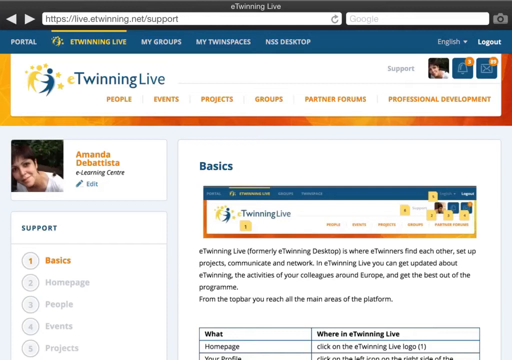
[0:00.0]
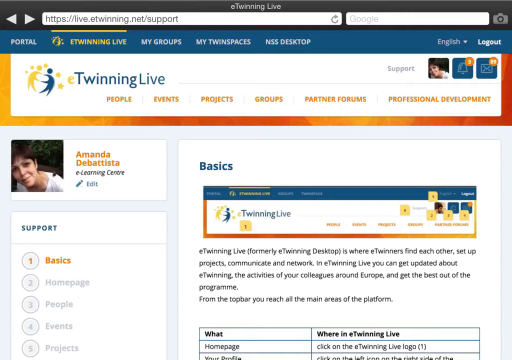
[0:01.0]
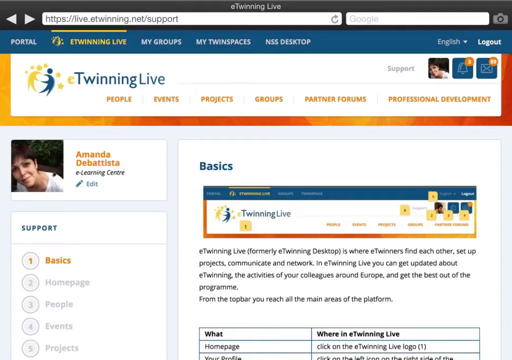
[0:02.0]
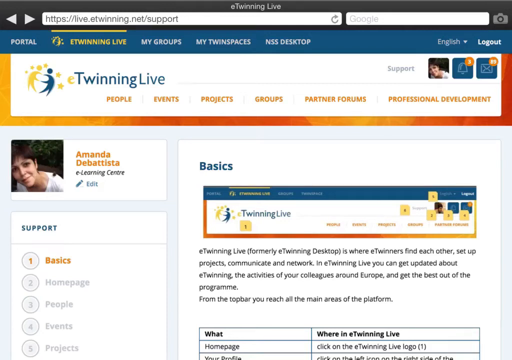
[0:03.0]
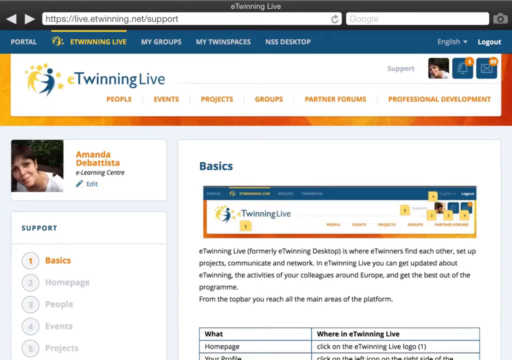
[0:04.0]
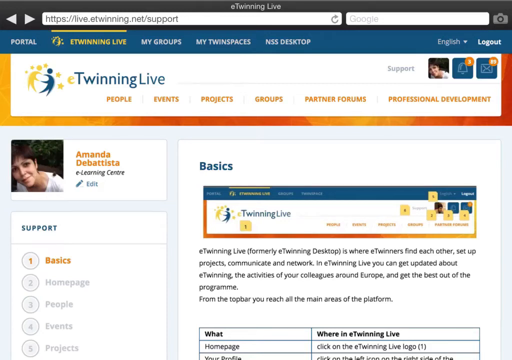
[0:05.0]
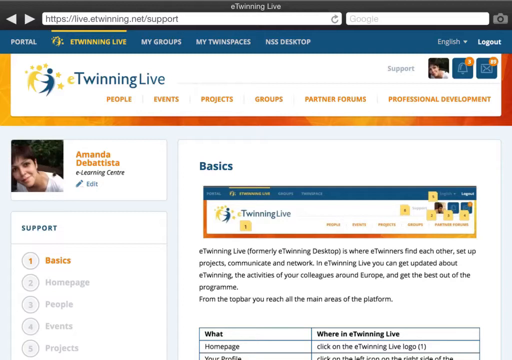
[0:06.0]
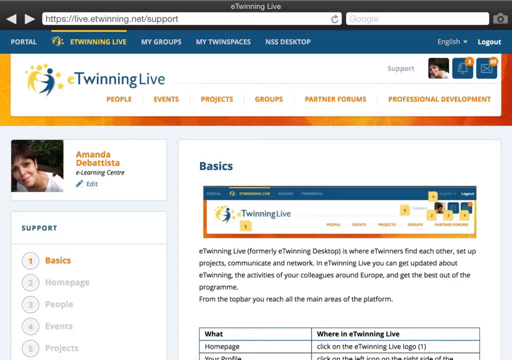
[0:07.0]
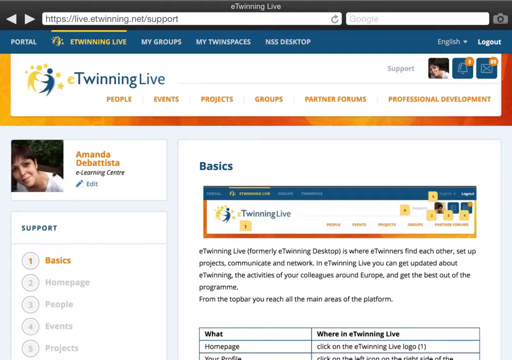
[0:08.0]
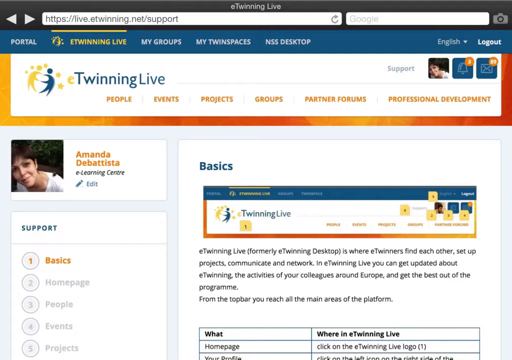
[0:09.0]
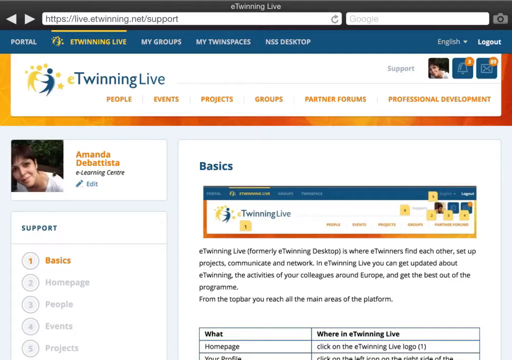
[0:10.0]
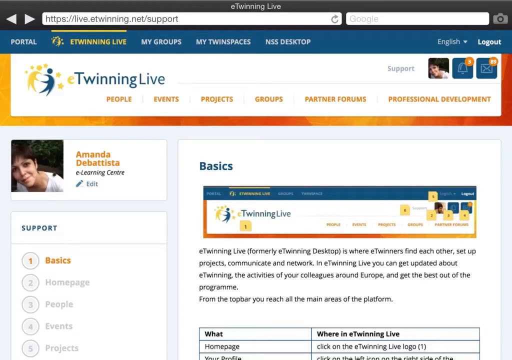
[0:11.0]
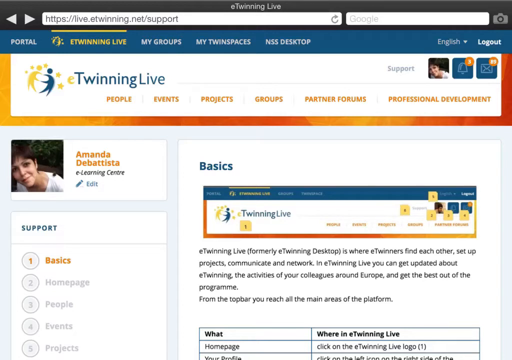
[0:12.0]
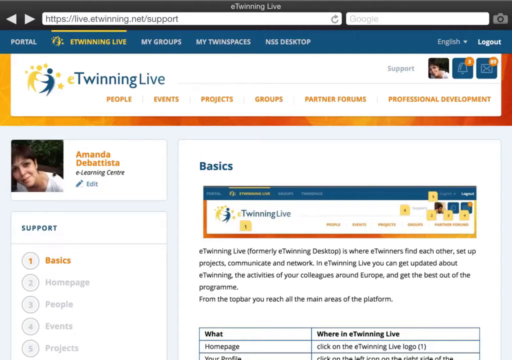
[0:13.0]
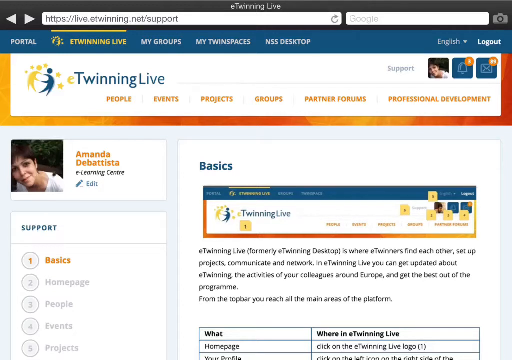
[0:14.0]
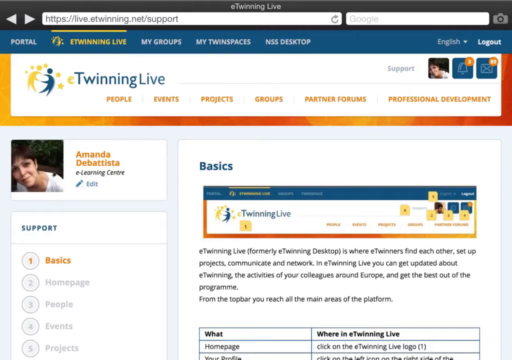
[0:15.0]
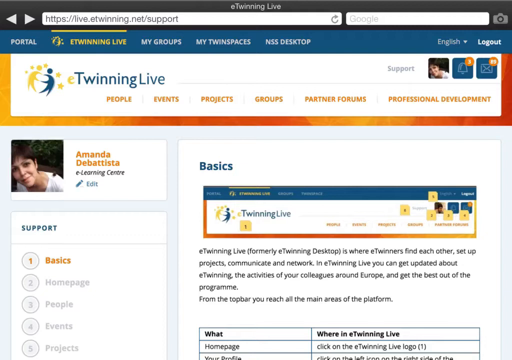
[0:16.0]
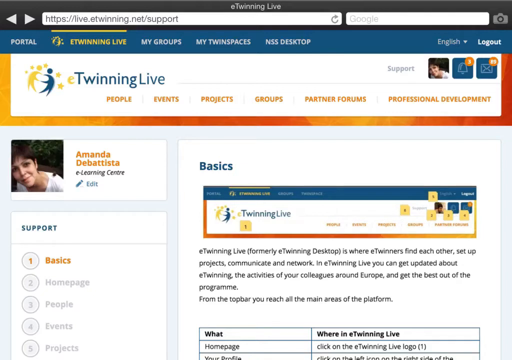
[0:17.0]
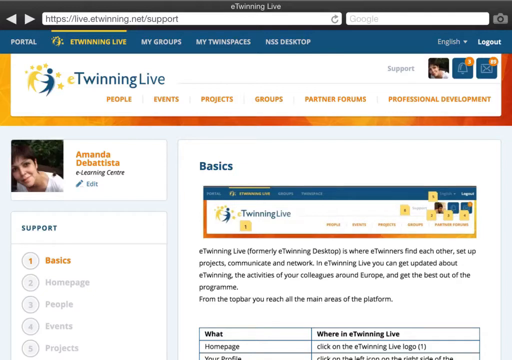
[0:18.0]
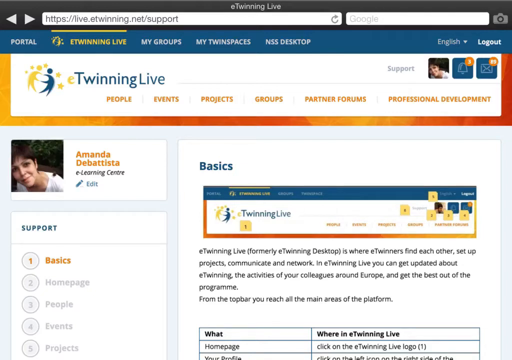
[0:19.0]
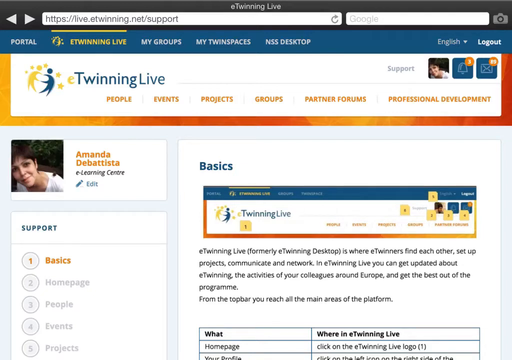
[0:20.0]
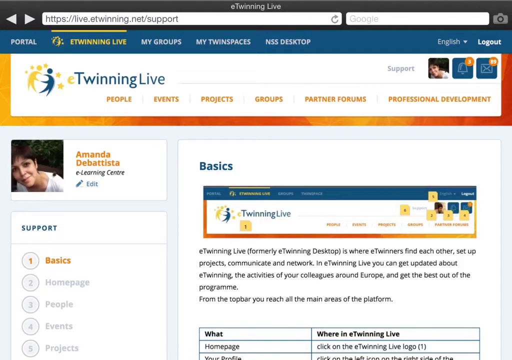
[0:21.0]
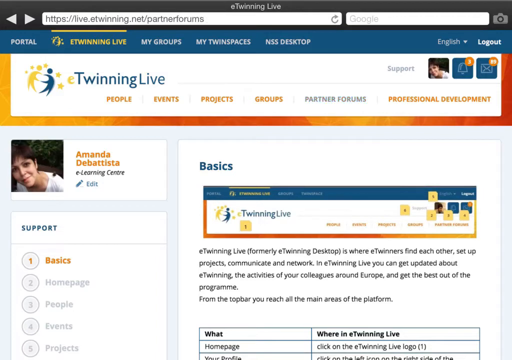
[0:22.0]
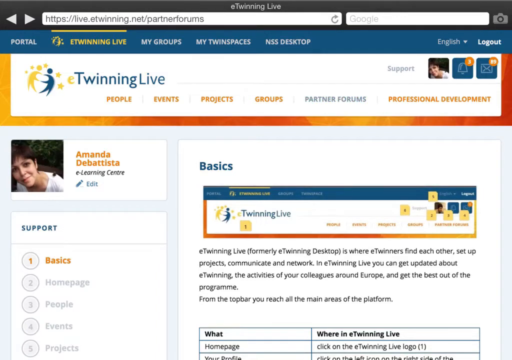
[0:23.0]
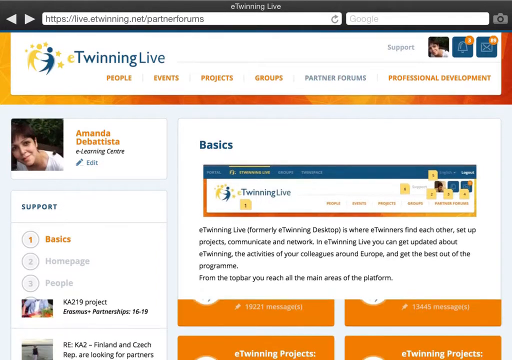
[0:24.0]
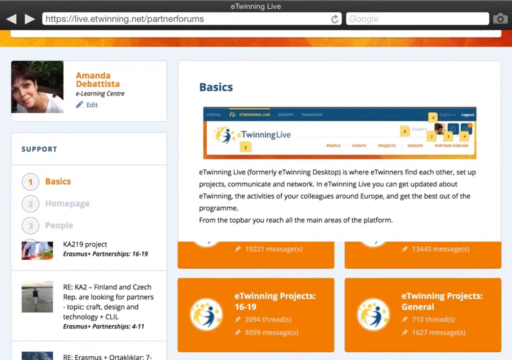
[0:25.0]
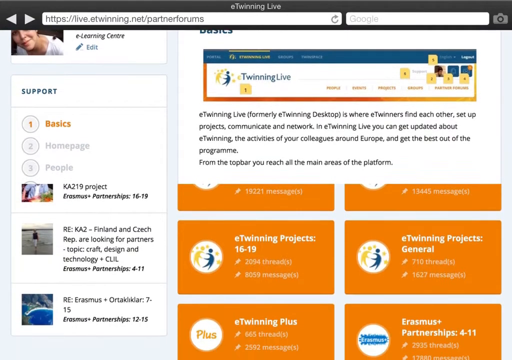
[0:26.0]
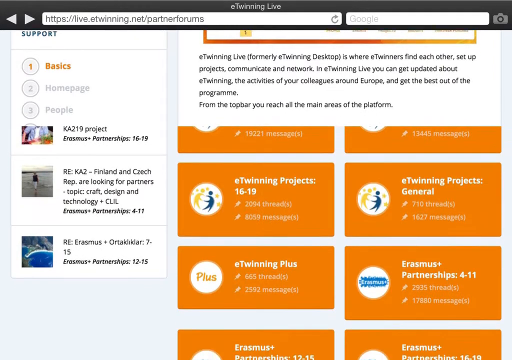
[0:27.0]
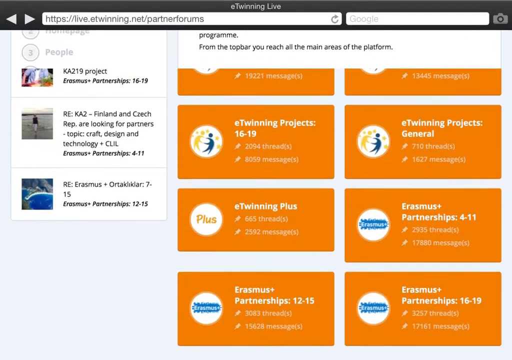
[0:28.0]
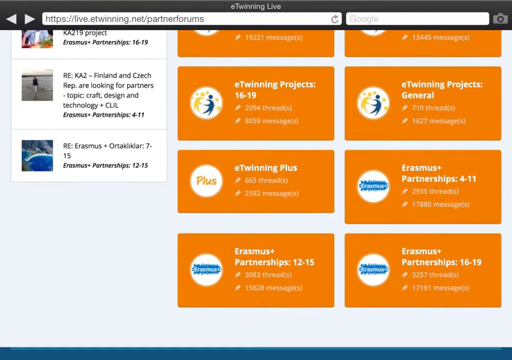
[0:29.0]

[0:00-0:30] A web page is shown, looking like a screenshot of a TV, apparently on an older laptop. The user is going through a website called eTwinning Live, scrolling slowly down. There are lots of orange tabs for viewing things, such as basics, homepage, people and events, and orange buttons that show trainings that can be done. The site apparently lets people across Europe communicate, do projects and network with one another. At the top of the website is a blue bar that says "portal to eTwinning Live", "My Groups", "My Twin Spaces" and "NSS Desktop"; the tab being viewed is "eTwinning Live". The logo is under it, along with other tabs such as "people", "events", "projects", "groups", "partner forms" and "professional development". The page being viewed apparently belongs to Amanda D. Batista, and an image of her is on the screen.